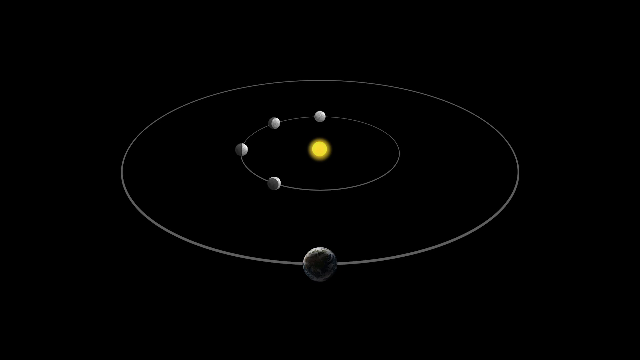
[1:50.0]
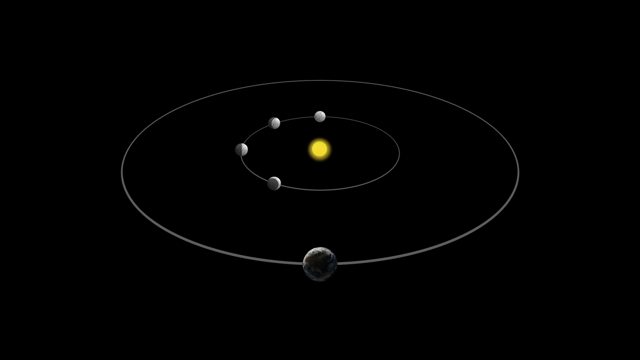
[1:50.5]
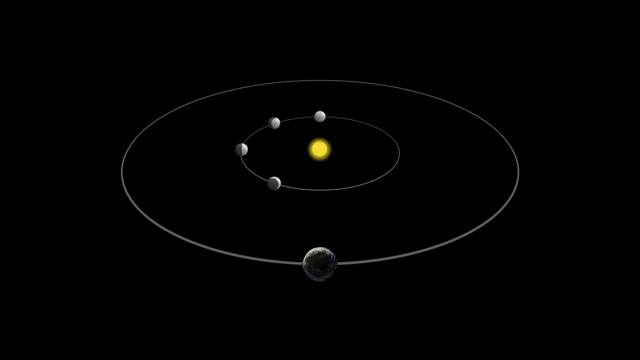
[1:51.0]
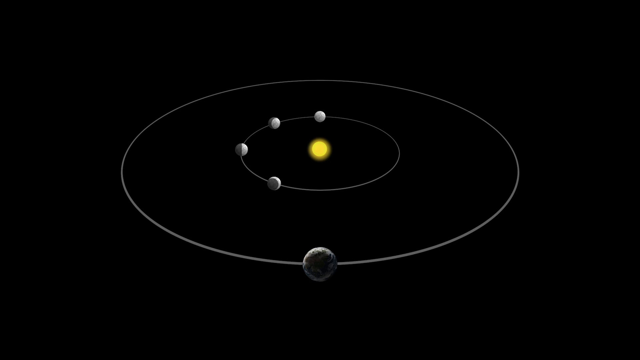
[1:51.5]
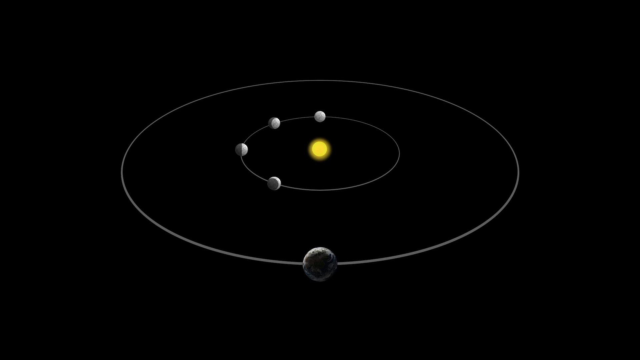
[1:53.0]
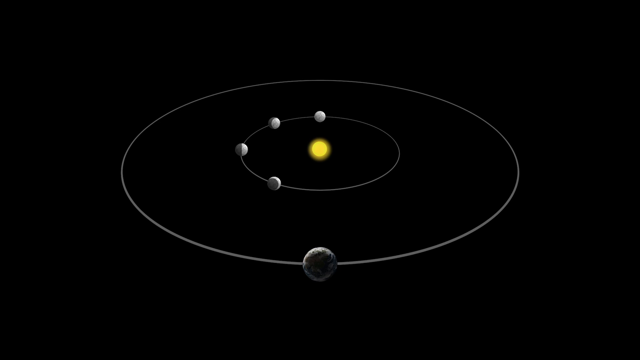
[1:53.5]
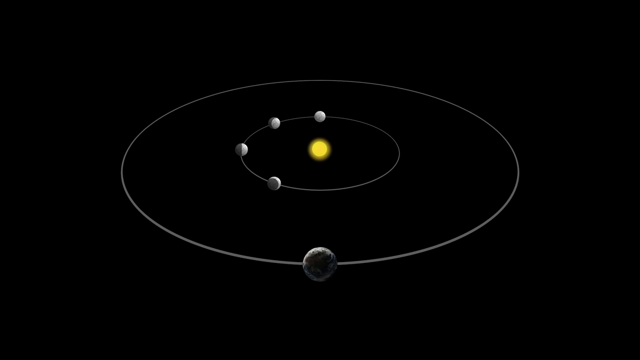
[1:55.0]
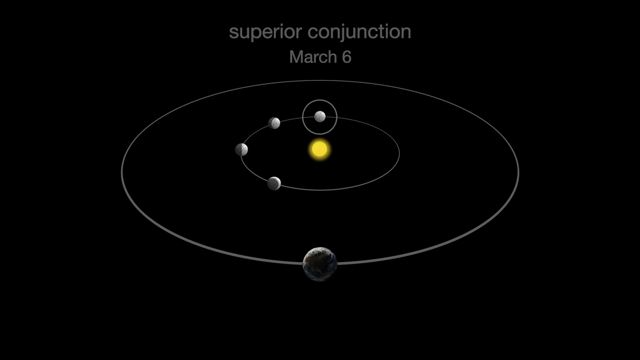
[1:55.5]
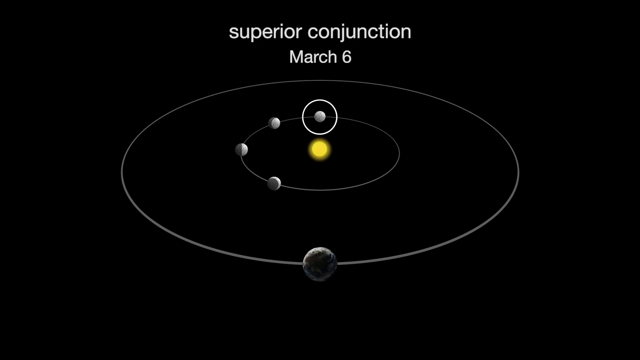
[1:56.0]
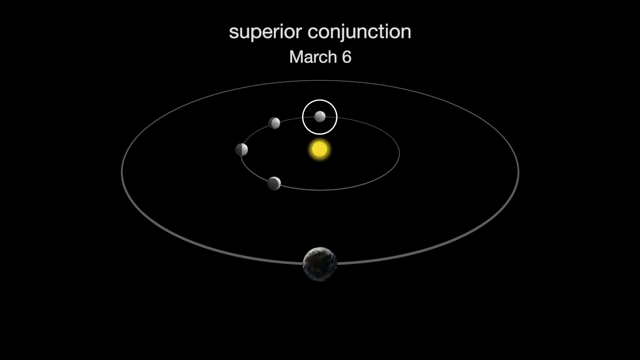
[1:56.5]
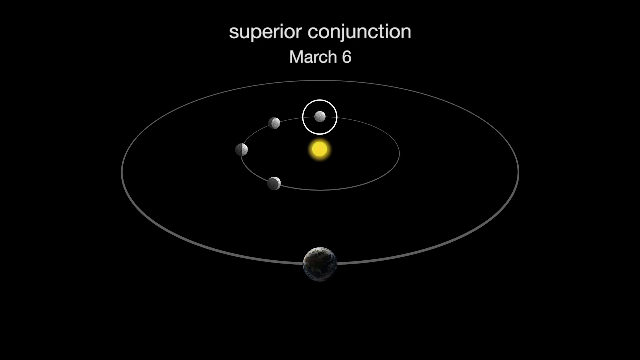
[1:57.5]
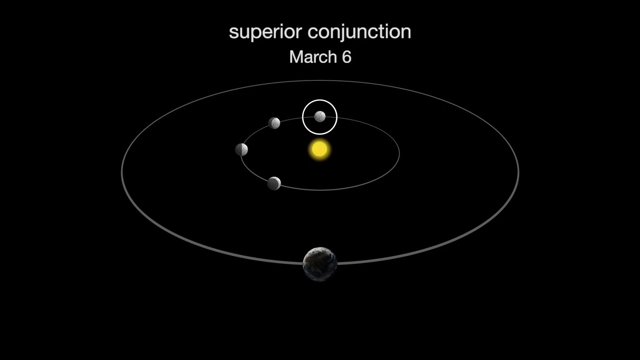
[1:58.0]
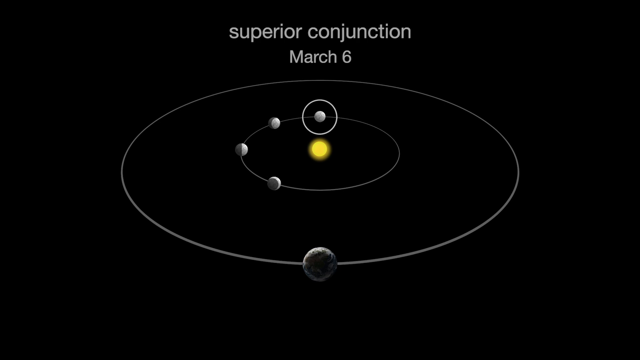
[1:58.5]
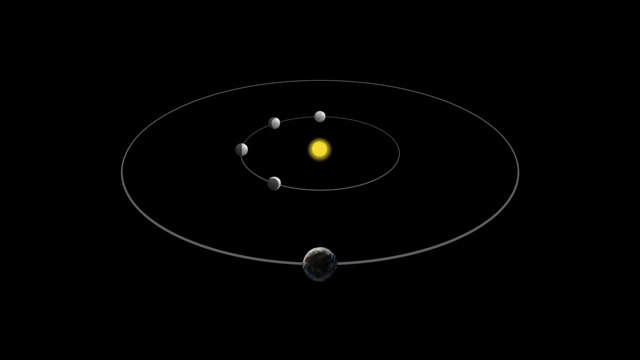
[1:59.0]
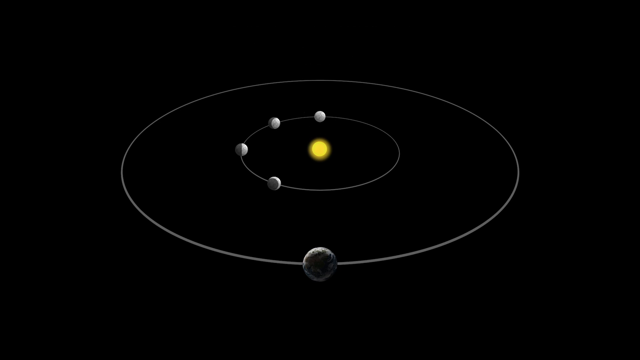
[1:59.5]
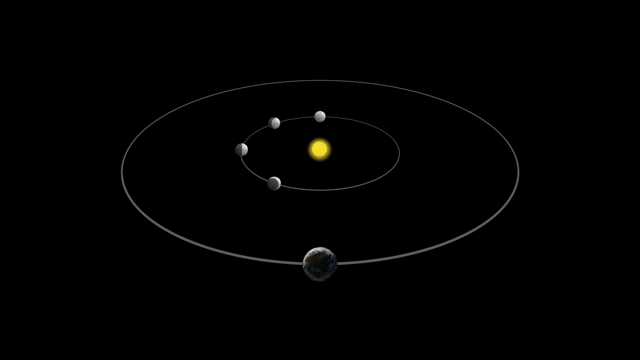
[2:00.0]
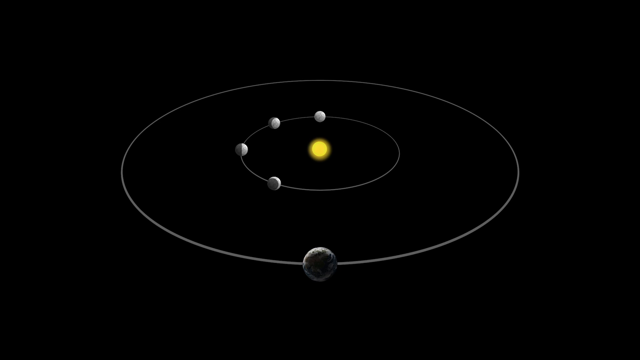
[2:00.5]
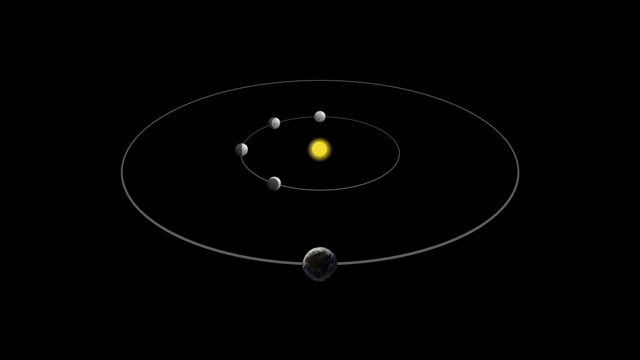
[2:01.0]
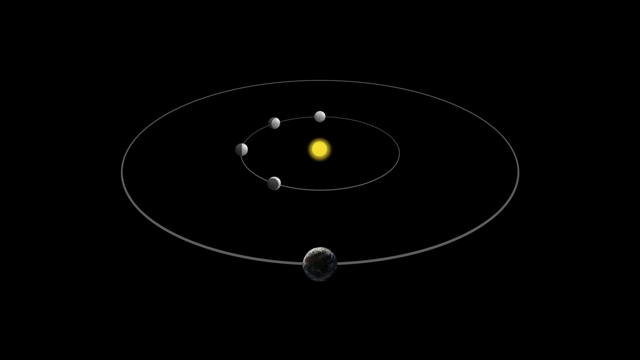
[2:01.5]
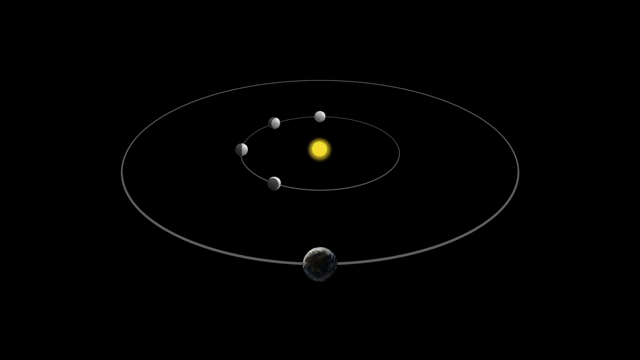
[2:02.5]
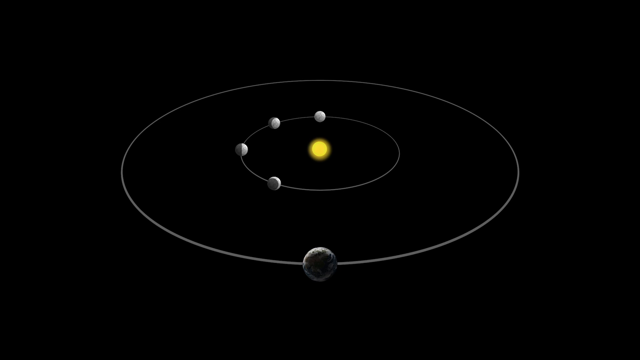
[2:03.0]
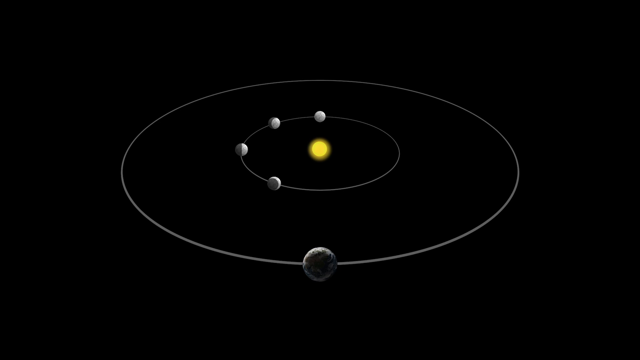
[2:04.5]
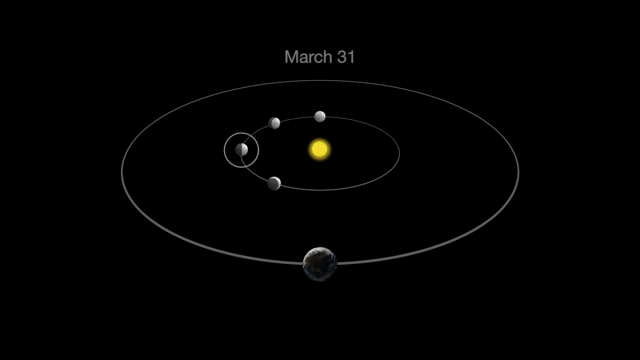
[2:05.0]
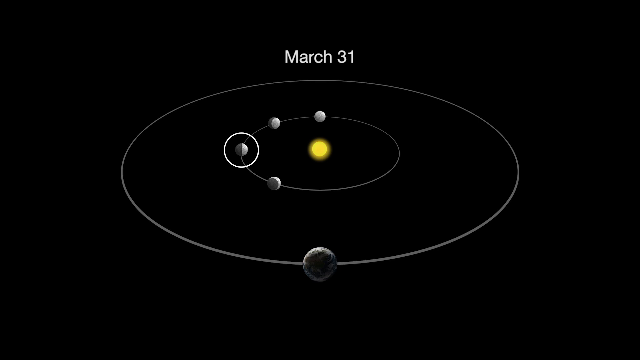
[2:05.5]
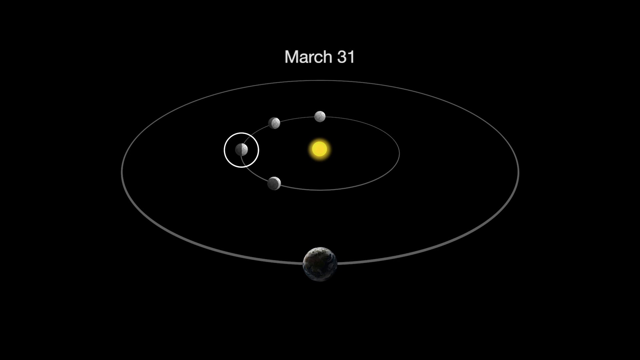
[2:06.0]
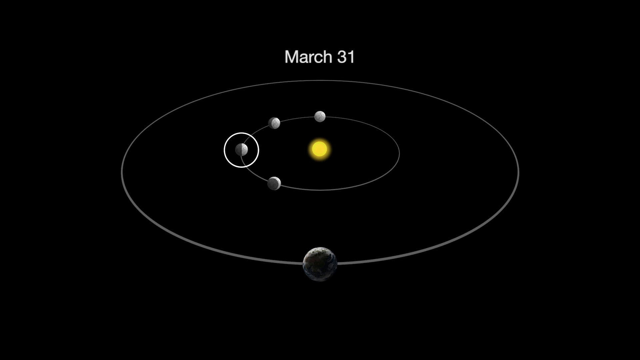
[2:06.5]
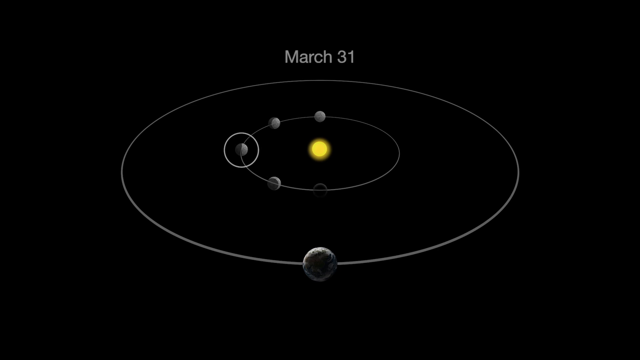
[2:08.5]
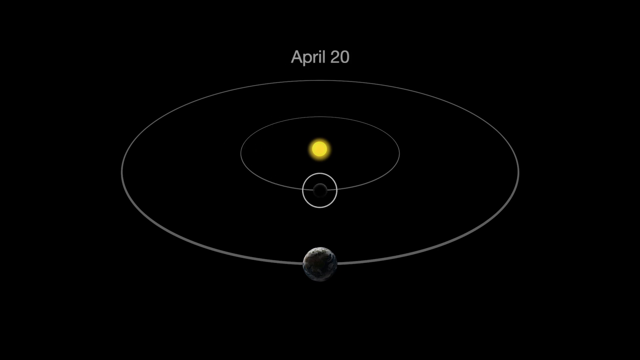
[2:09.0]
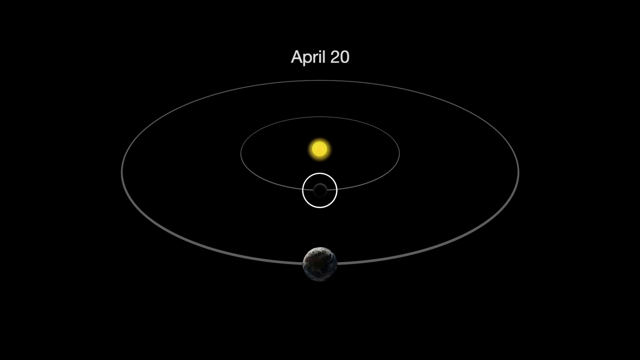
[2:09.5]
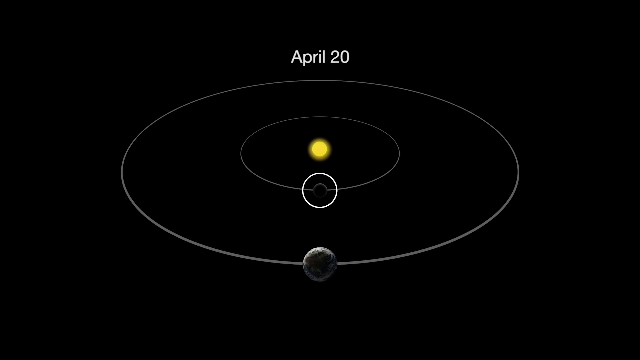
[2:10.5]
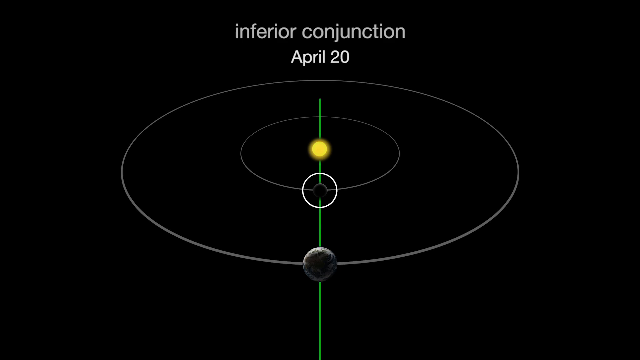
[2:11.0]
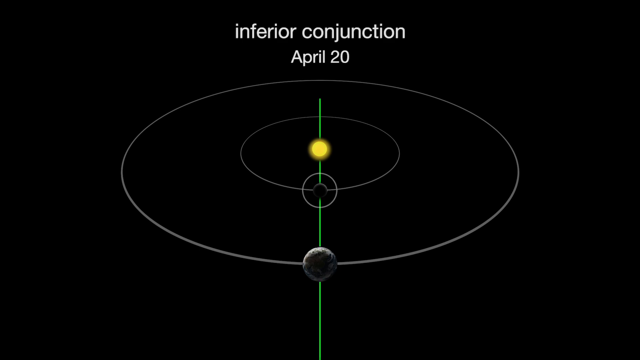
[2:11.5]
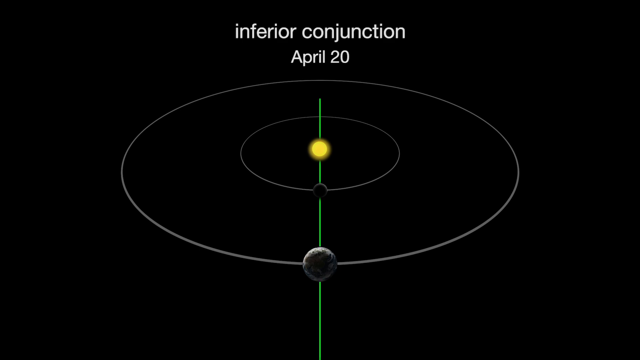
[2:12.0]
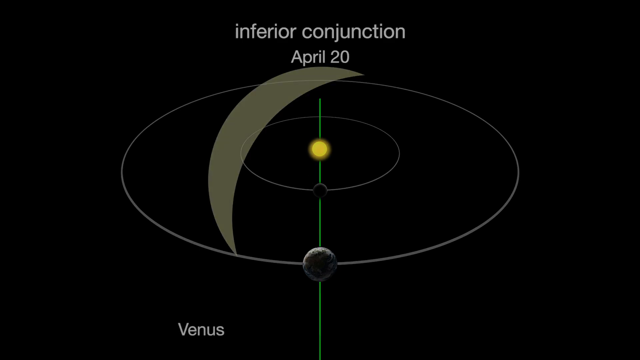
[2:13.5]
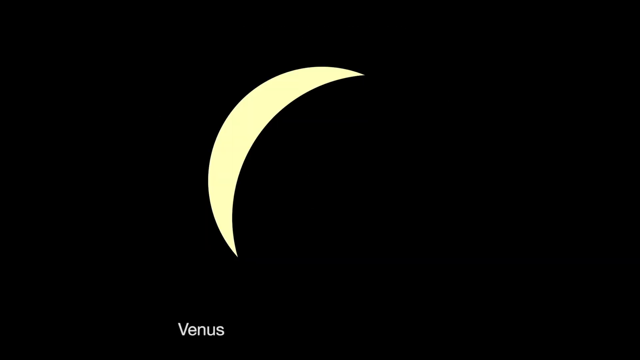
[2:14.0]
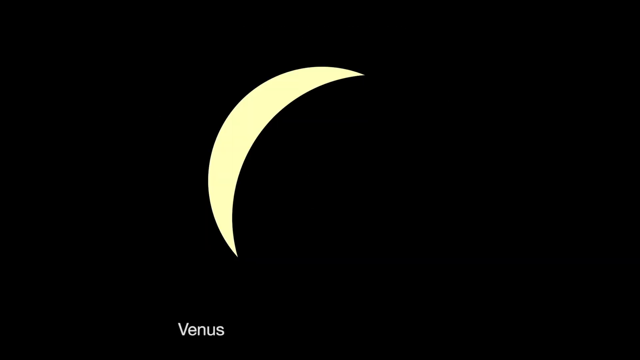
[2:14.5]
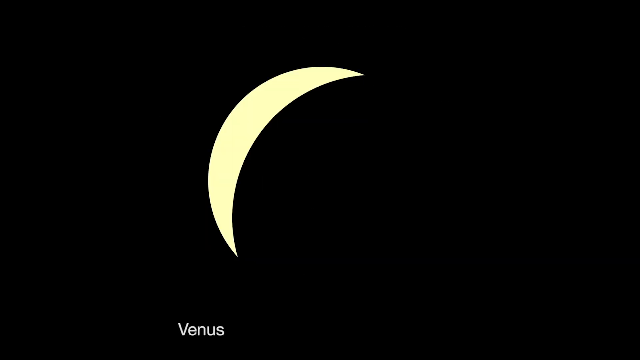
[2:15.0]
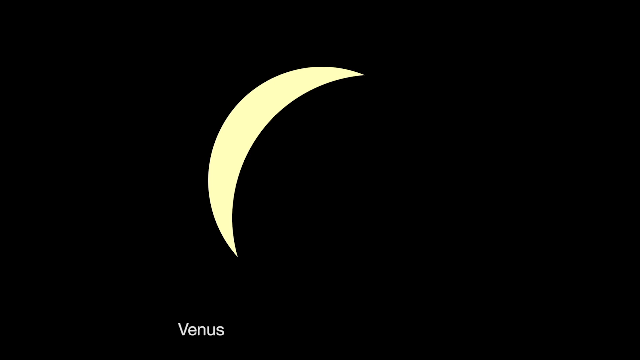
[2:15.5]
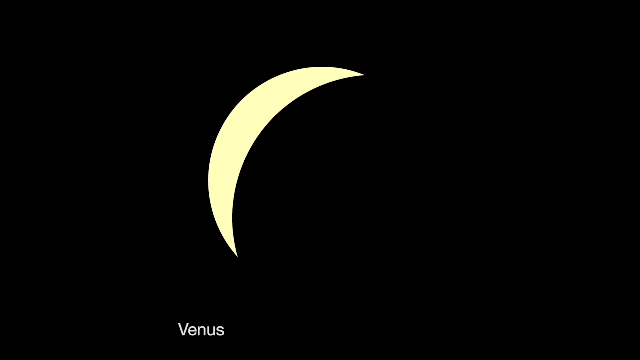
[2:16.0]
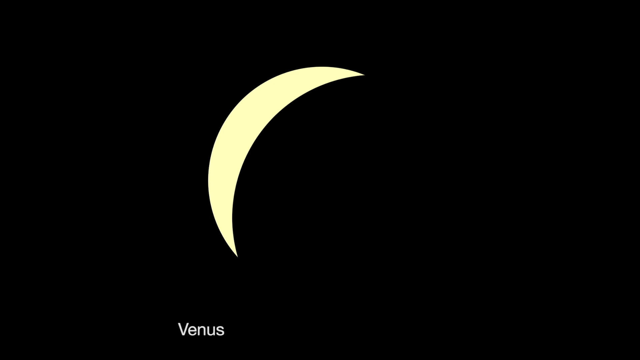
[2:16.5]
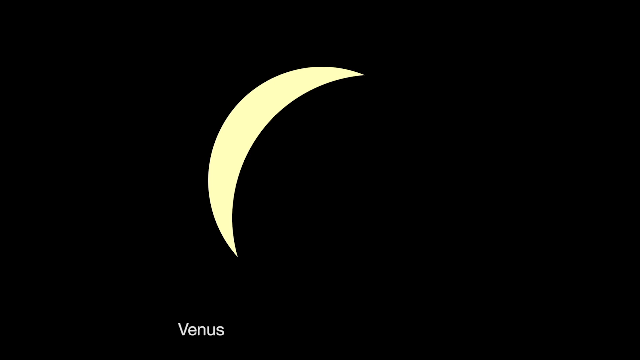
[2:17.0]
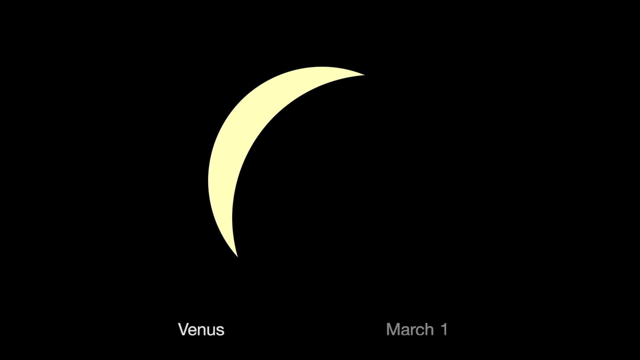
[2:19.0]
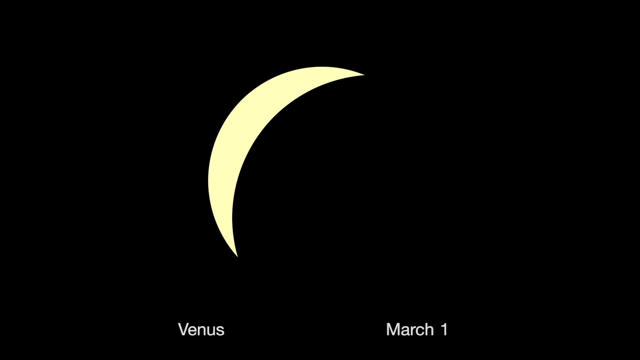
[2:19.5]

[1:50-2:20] A representation of planets revolving around the Sun shows a superior conjunction, with the date March 23rd. Text refers to different time points for an inferior conjunction and a superior conjunction. The background is completely black, with no stars.